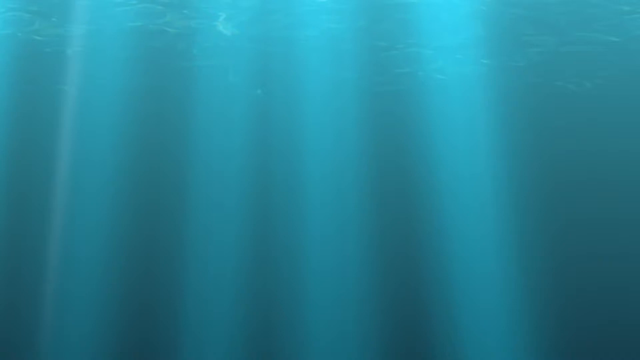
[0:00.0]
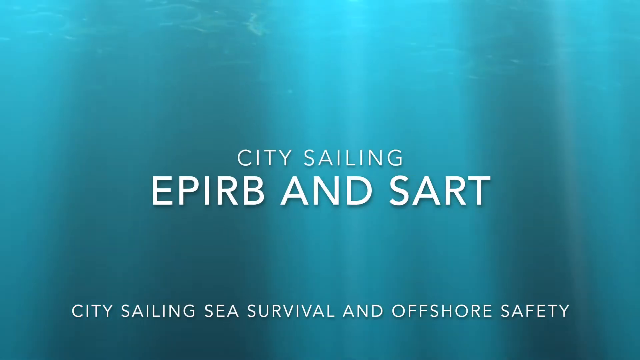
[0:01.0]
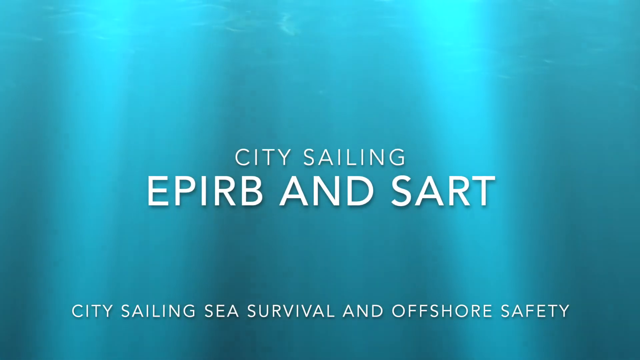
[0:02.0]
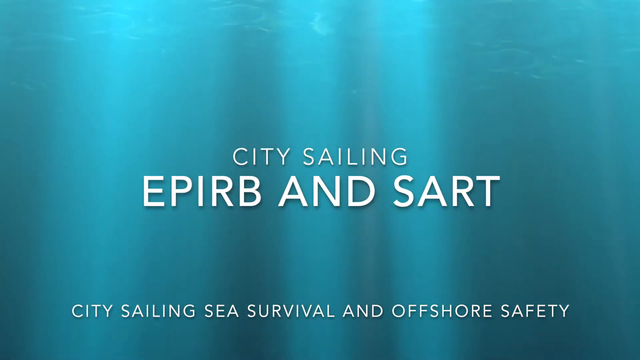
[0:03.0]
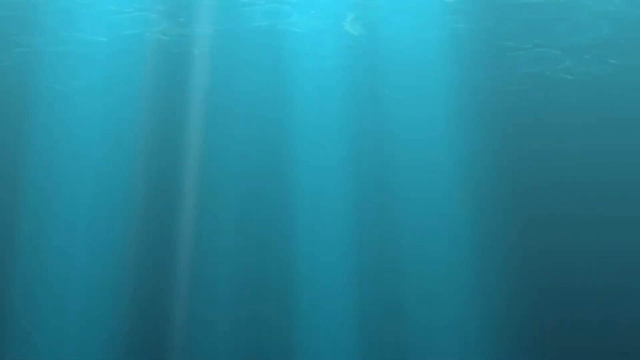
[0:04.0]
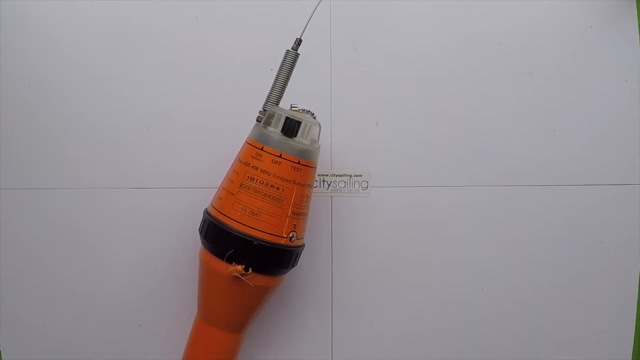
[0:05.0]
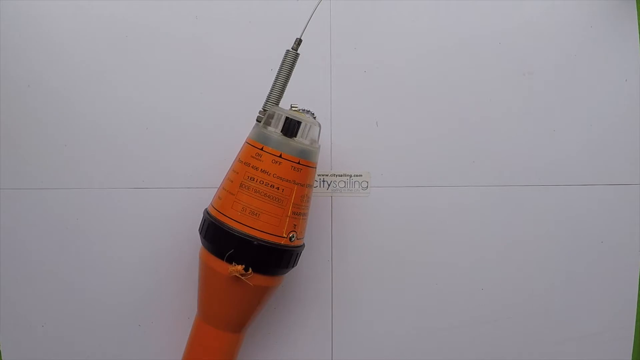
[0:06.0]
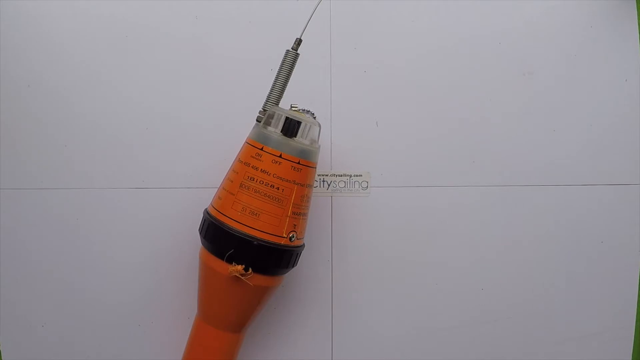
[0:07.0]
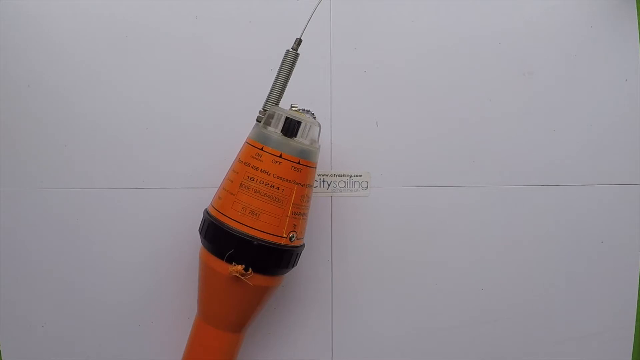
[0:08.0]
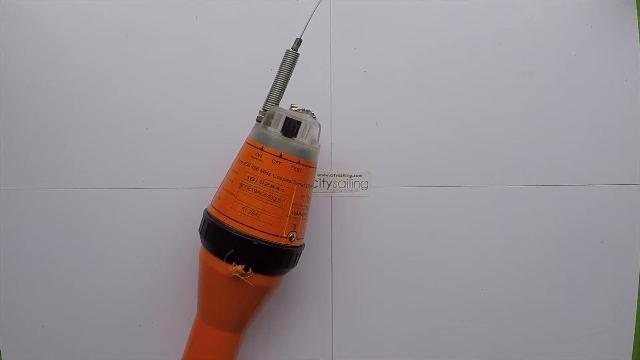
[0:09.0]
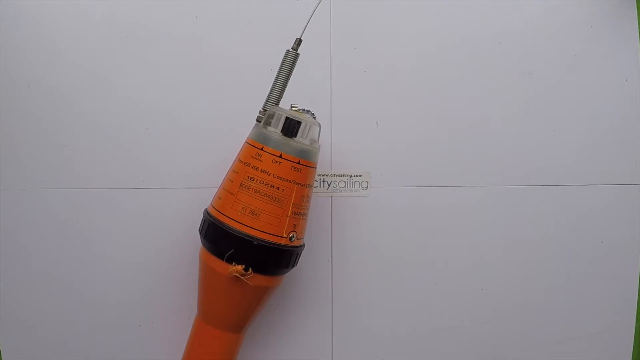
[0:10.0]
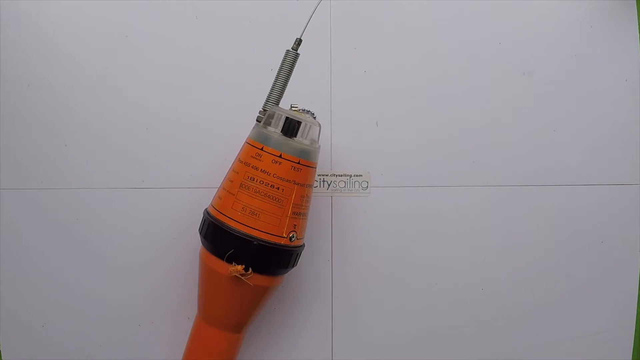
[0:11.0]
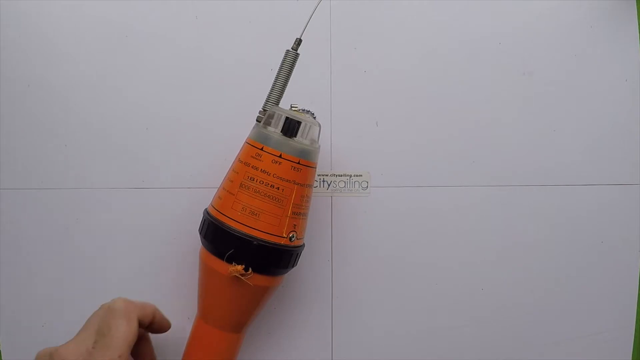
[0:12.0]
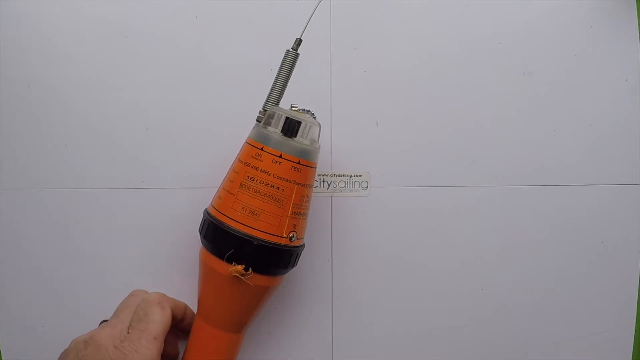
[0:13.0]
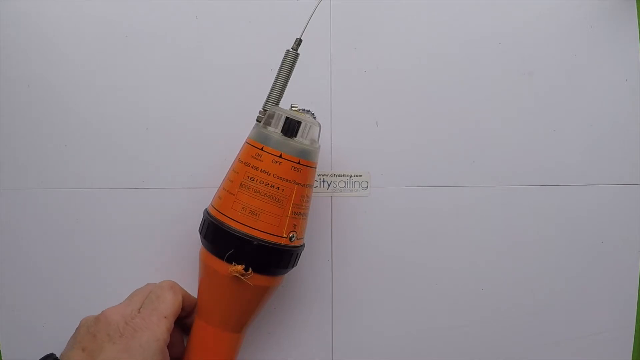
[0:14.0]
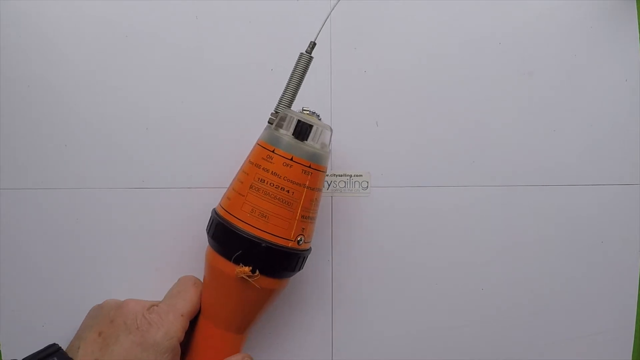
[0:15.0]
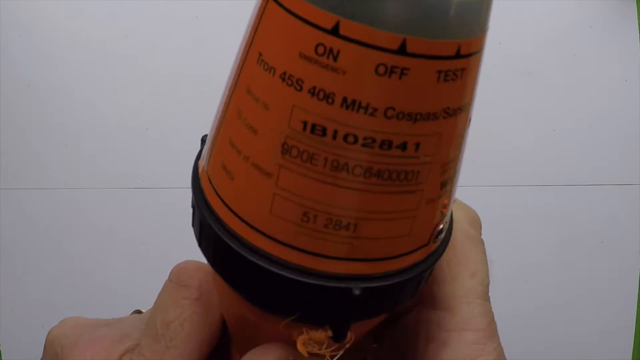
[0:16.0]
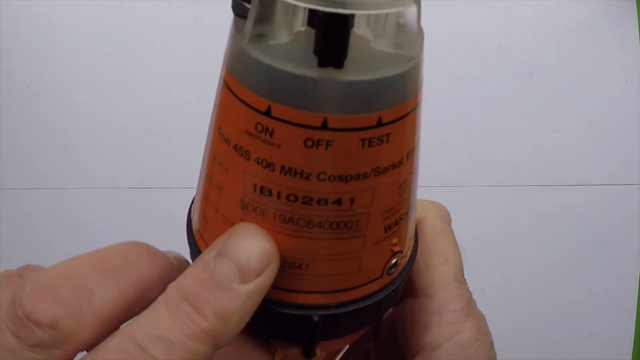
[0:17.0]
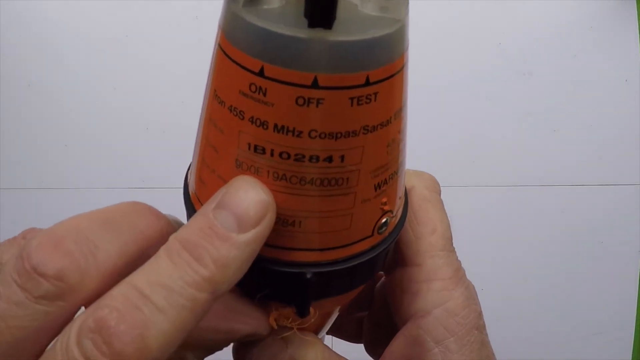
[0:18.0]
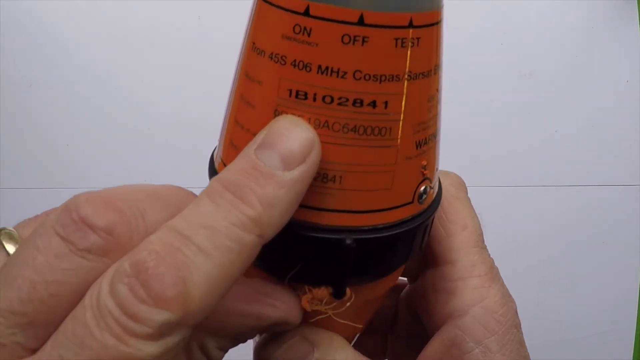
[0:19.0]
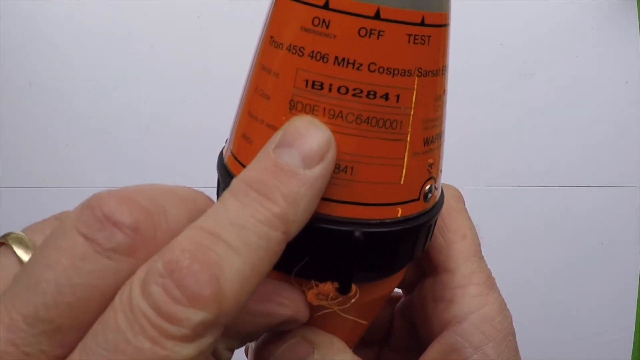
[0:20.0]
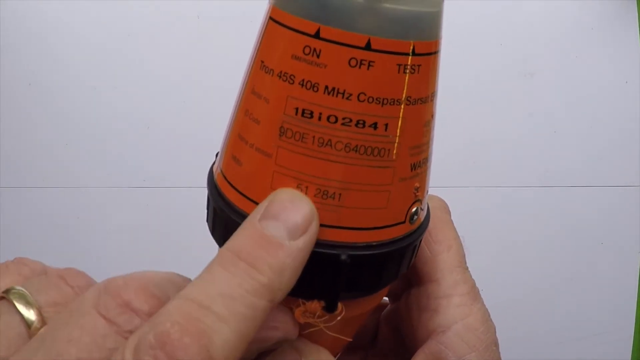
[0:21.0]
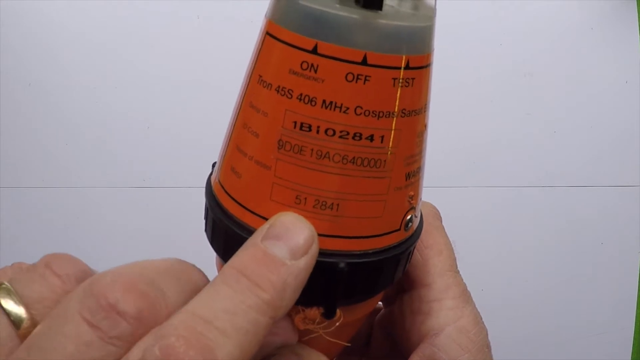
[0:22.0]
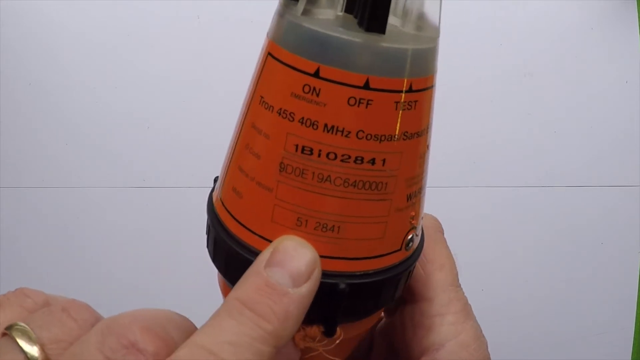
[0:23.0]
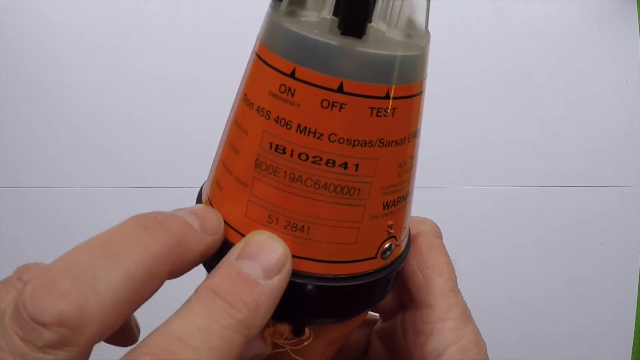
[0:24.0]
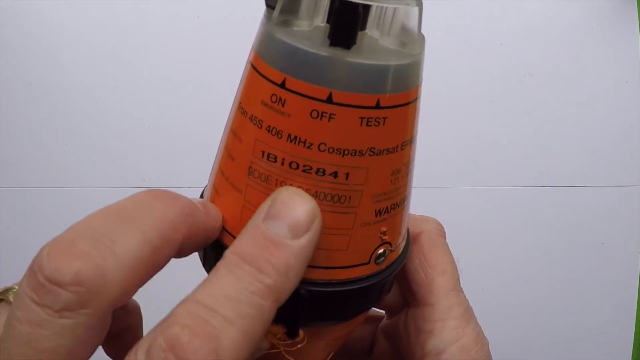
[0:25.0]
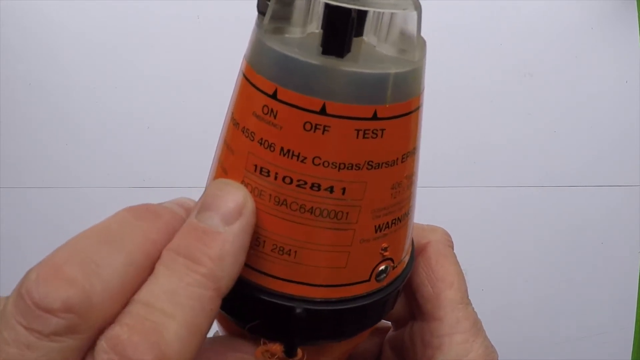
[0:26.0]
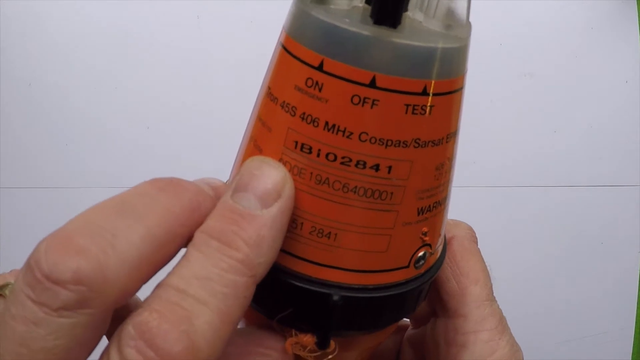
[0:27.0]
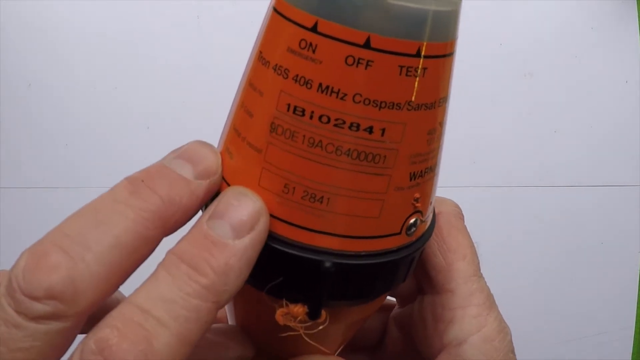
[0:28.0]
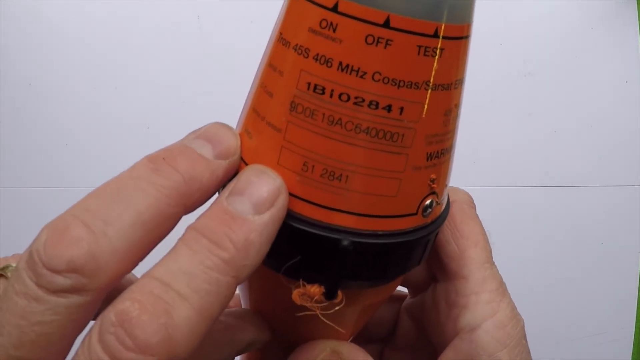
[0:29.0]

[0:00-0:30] The video opens on a soft blue background that appears to be an underwater scene, with light from above cast down in vertical shadows. Bold white text on the screen reads "city sailing sea survival and offshore safety". Next, what appears to be a white floor or white table divided into four sections comes into view, with an orange piece of equipment on it. The equipment has a nozzle with the word "on off" or "test" in dark black bold text. The camera shot is vertically above it. A hand reaches for the tool, picks it up and brings it toward the camera, pointing to what appears to be the machine's model number and capacity.